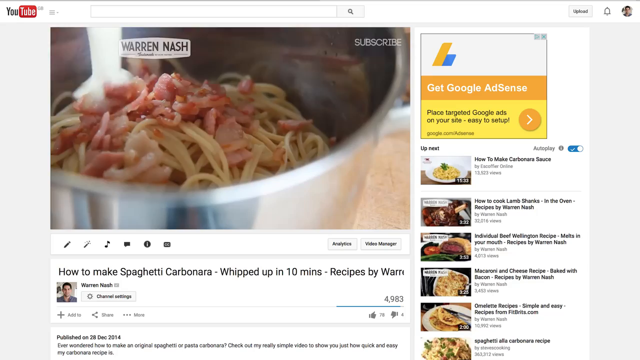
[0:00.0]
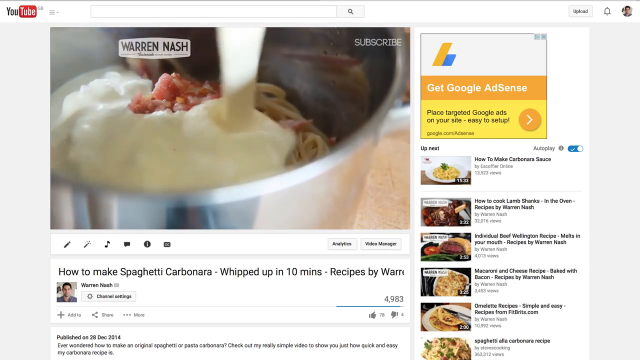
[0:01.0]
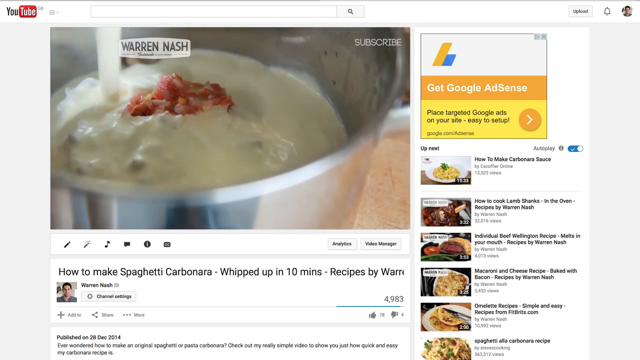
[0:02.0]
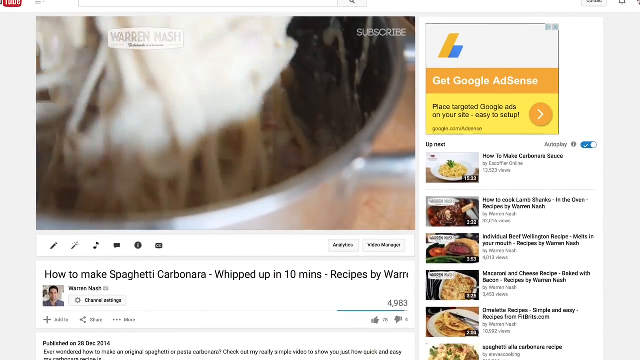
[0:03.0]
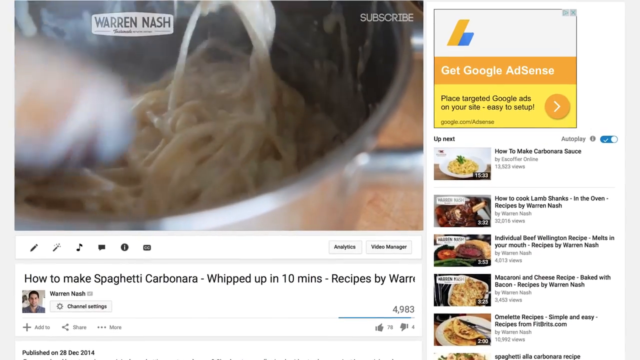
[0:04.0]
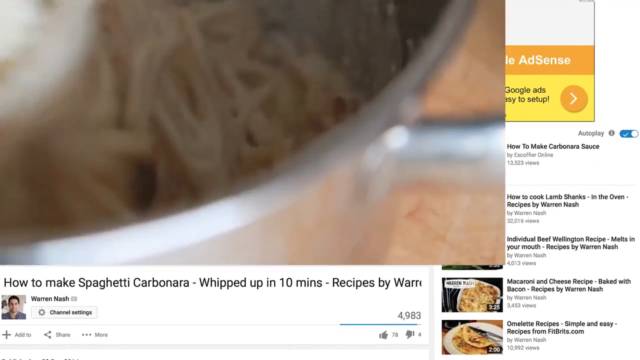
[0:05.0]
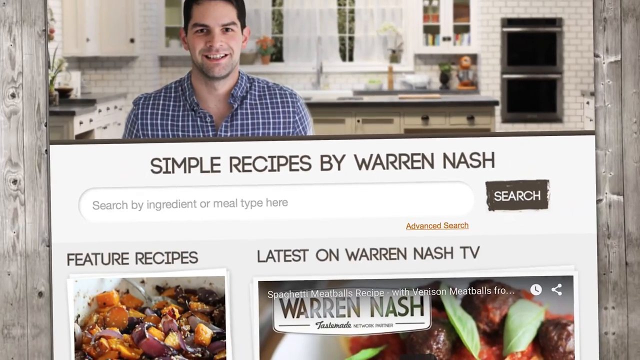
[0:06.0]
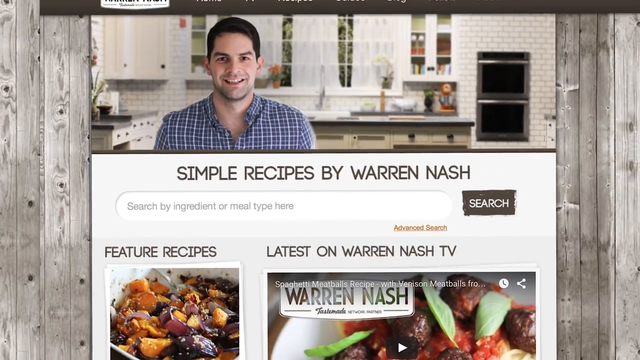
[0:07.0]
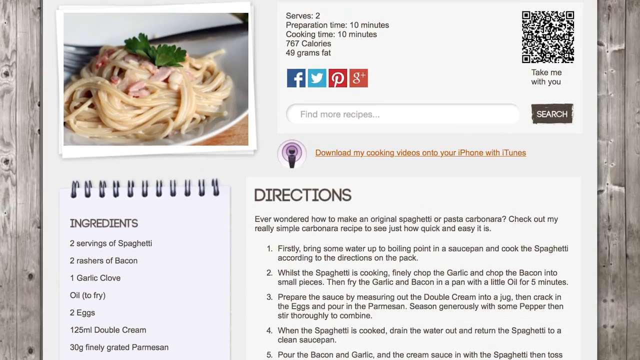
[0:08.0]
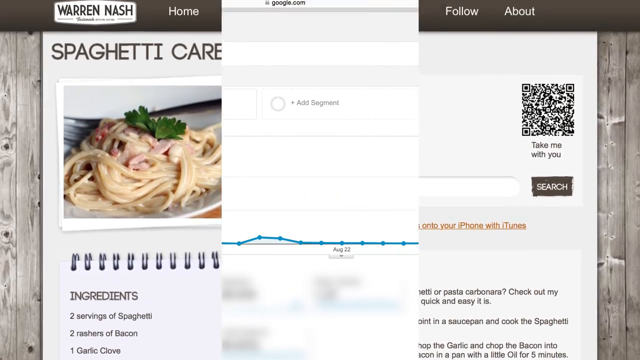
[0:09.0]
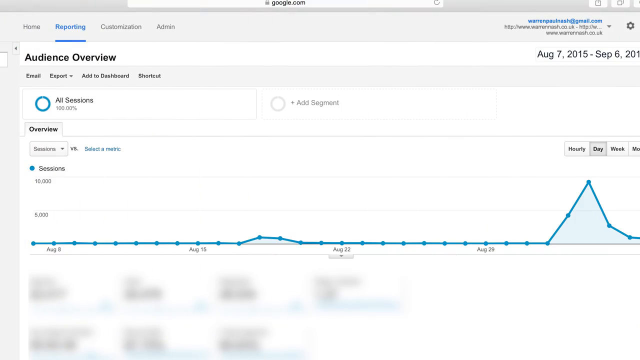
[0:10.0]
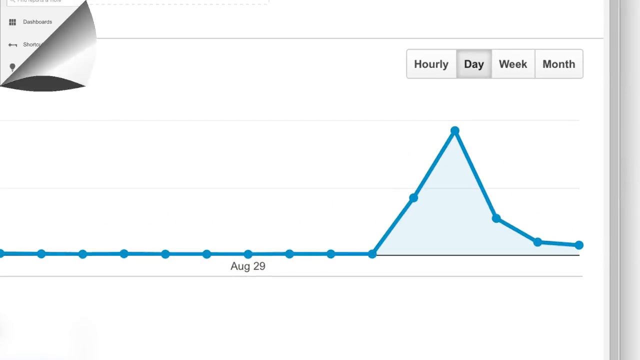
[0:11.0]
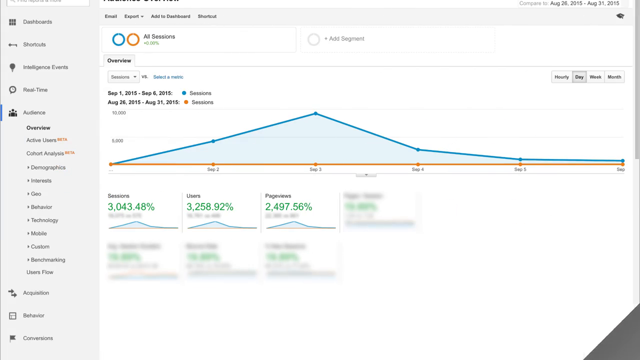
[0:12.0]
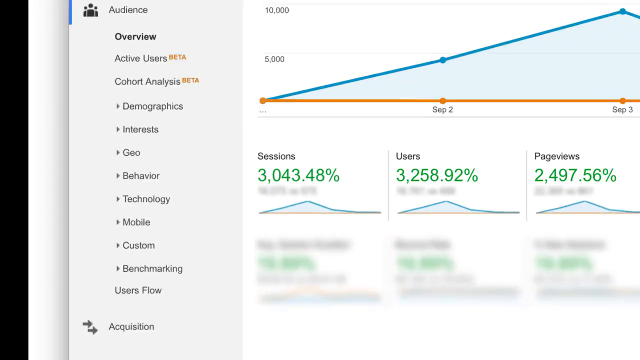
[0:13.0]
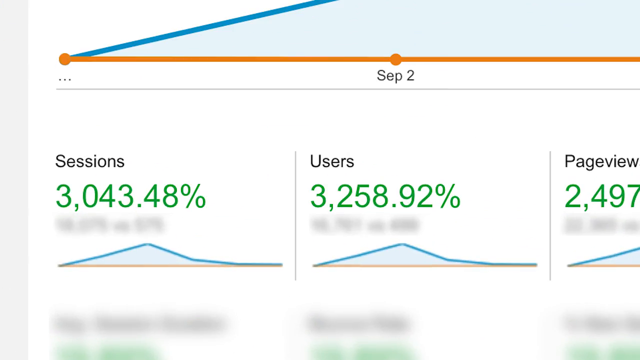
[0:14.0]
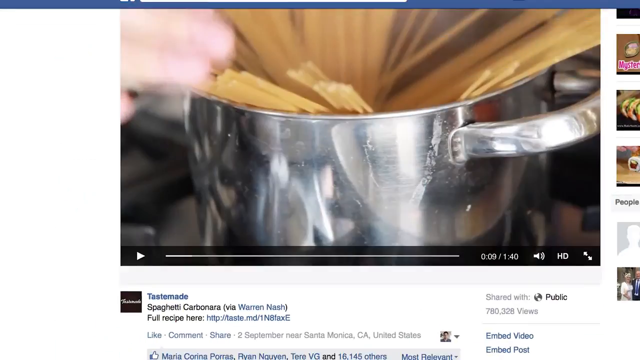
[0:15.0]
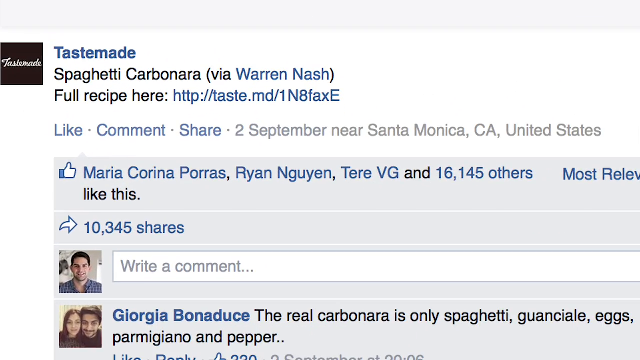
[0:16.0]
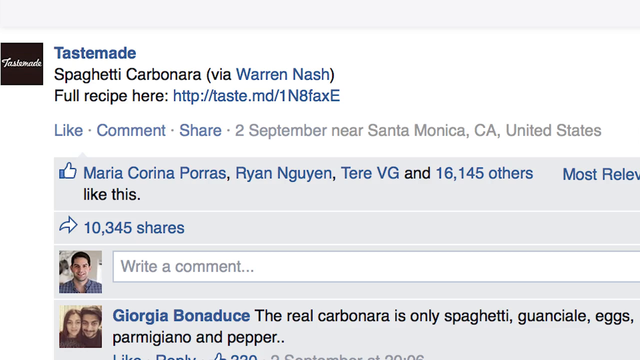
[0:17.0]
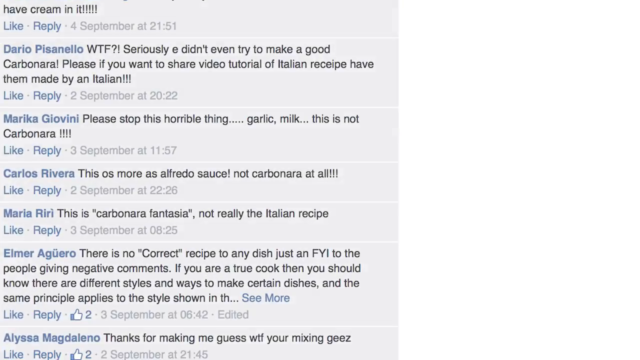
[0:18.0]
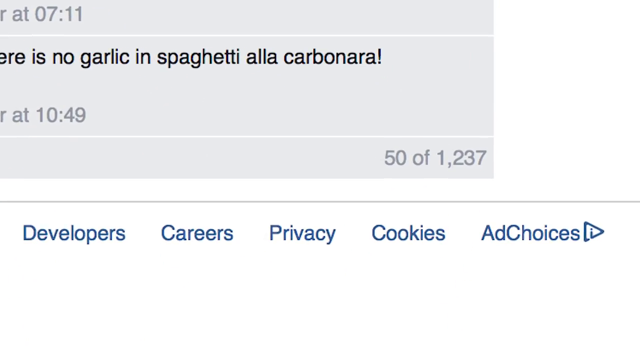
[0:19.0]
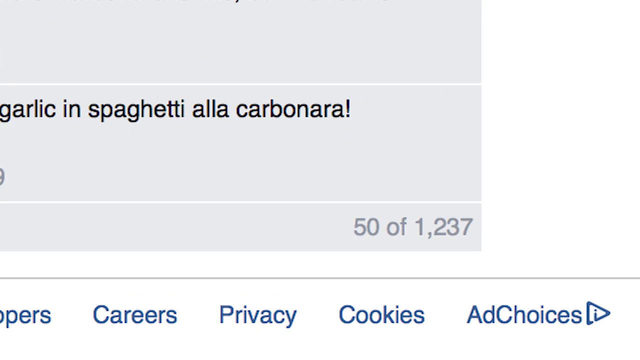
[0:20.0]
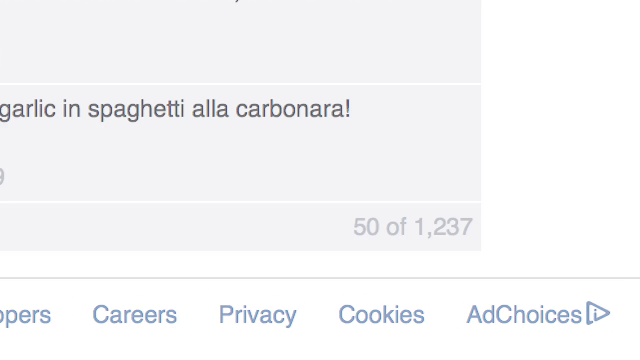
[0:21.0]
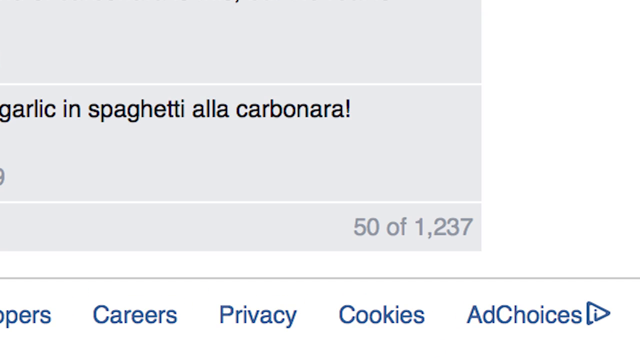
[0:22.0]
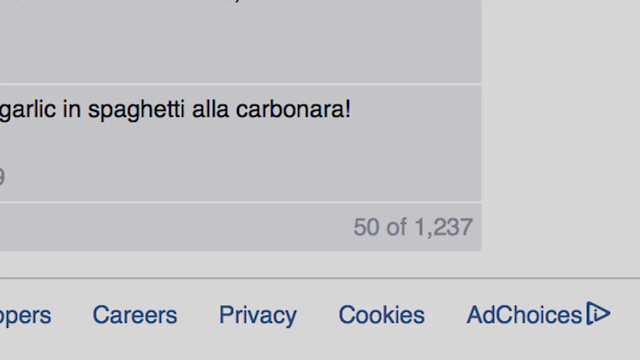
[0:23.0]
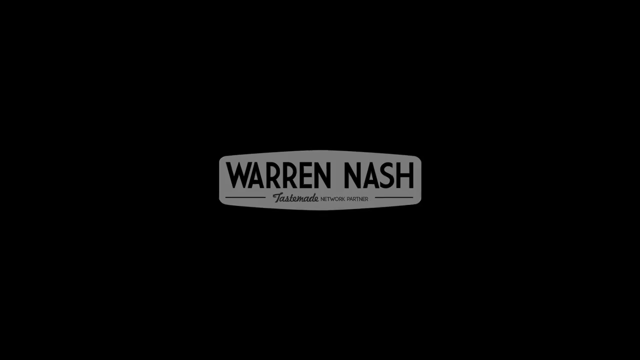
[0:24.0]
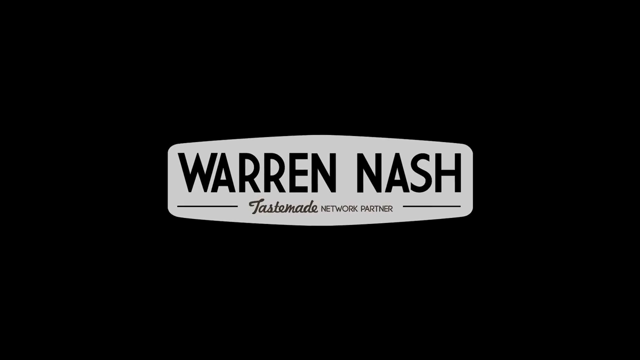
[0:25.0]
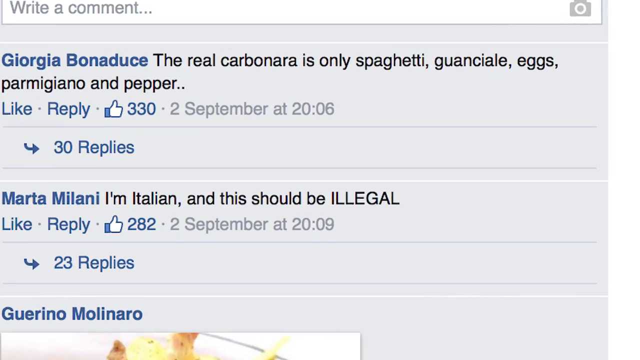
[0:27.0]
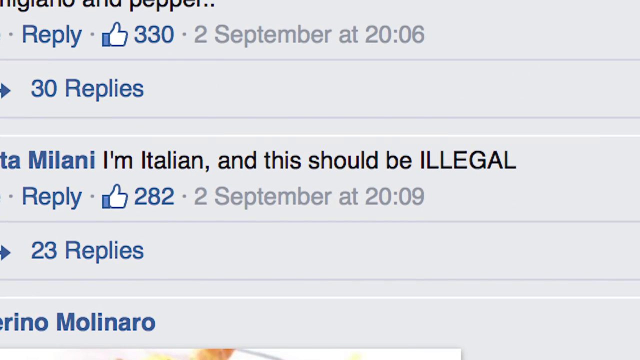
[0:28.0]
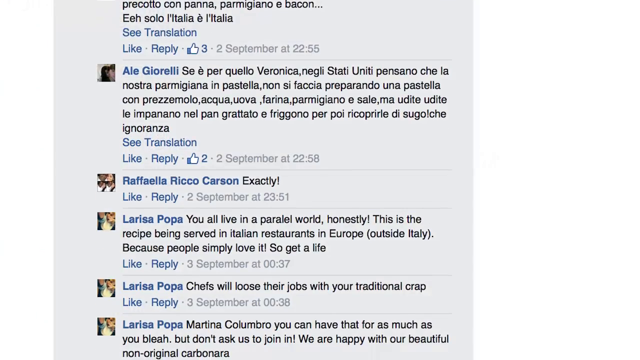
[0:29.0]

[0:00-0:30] What looks like a social media post is shown, apparently posted on Facebook. It appears to be a video of a creamy spaghetti recipe posted by a person called Warren. The post has a lot of views and a lot of comments, with people liking and interacting with it. It is a recipe post that includes the video along with directions for making the spaghetti. In the comments people laugh at the spaghetti, and the comments are very positive about what the owner of the post did. The page has thousands of followers.